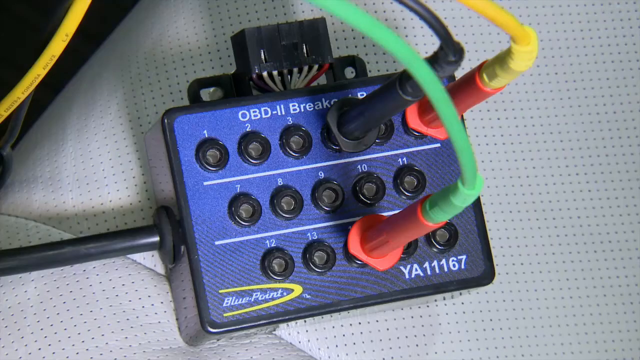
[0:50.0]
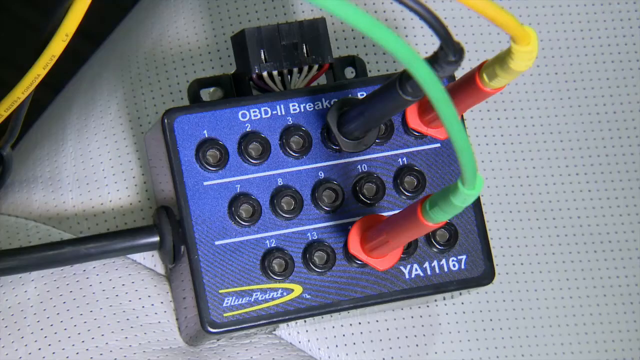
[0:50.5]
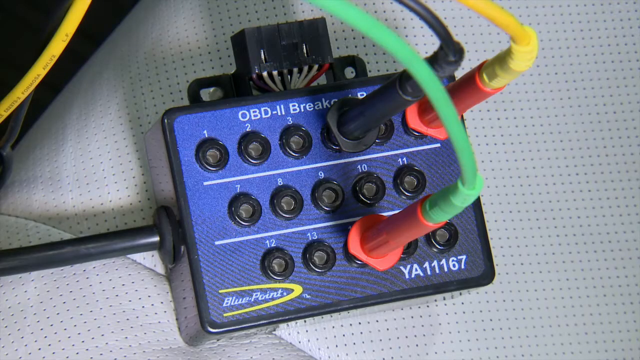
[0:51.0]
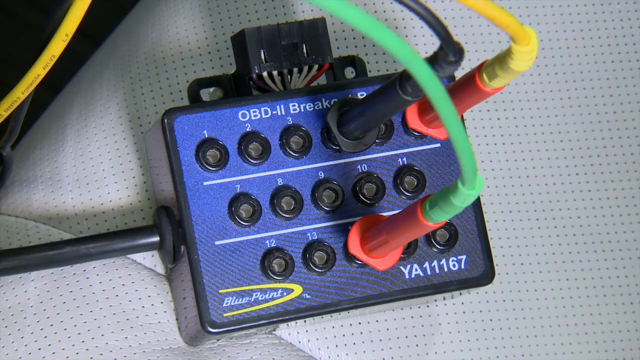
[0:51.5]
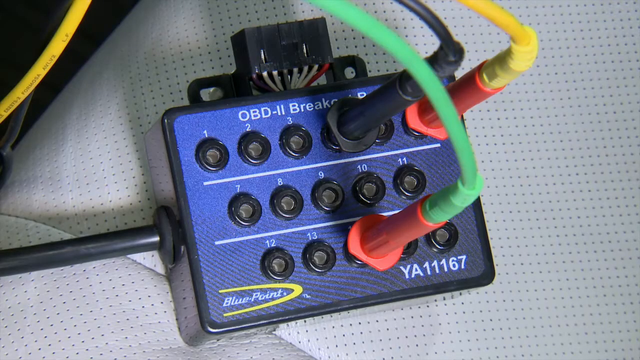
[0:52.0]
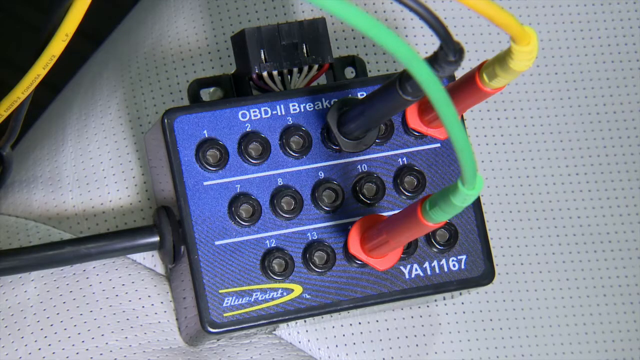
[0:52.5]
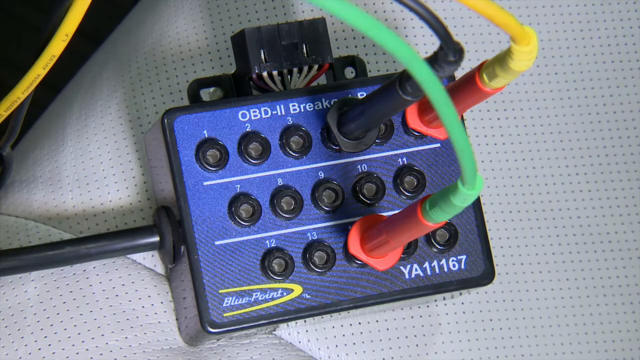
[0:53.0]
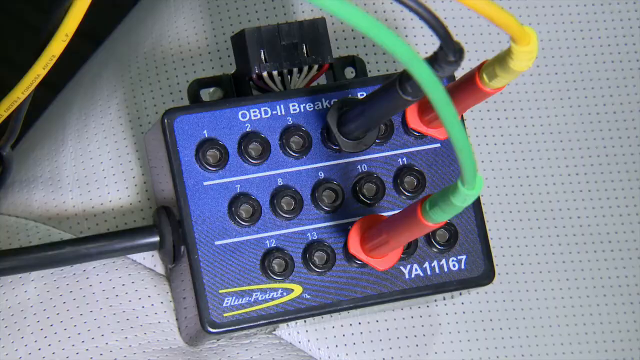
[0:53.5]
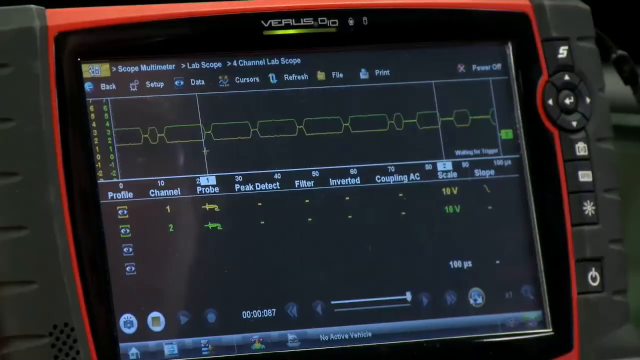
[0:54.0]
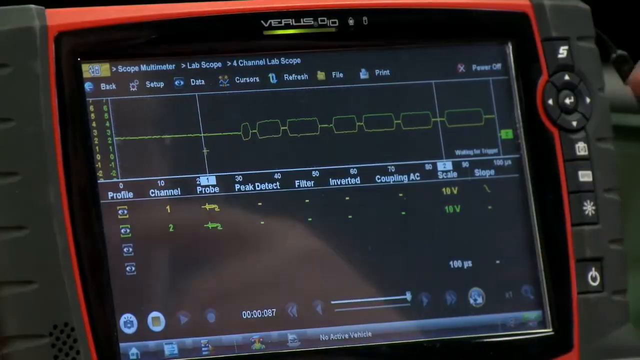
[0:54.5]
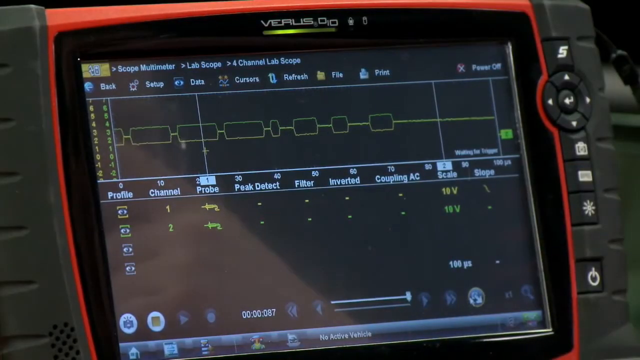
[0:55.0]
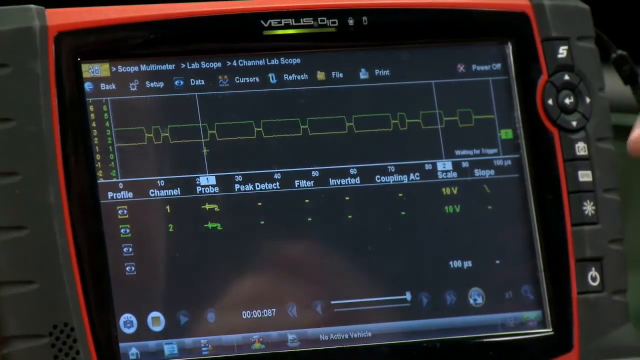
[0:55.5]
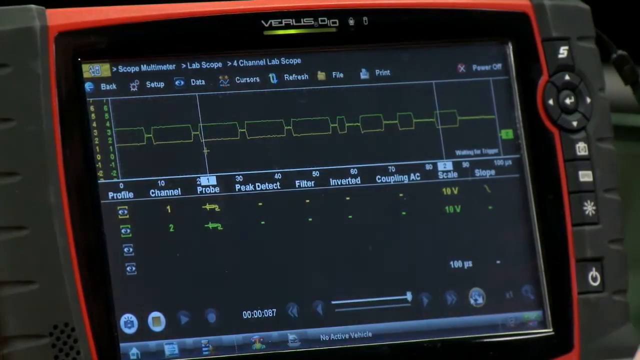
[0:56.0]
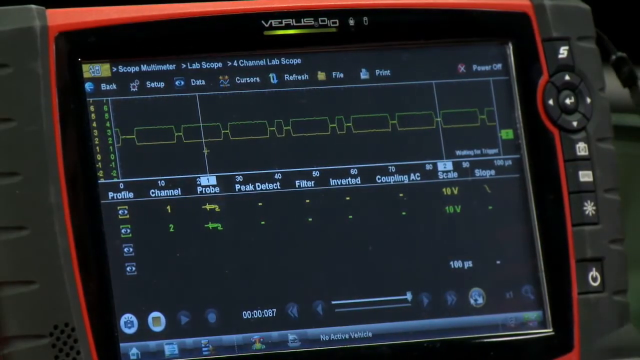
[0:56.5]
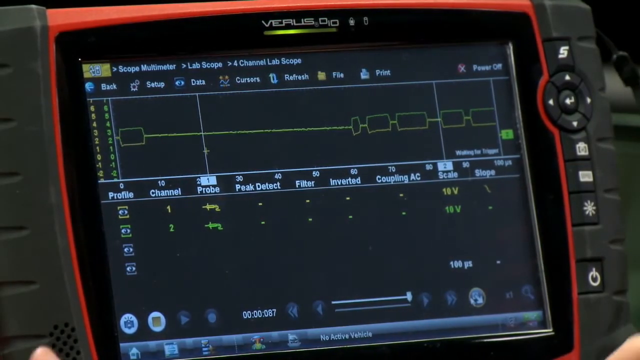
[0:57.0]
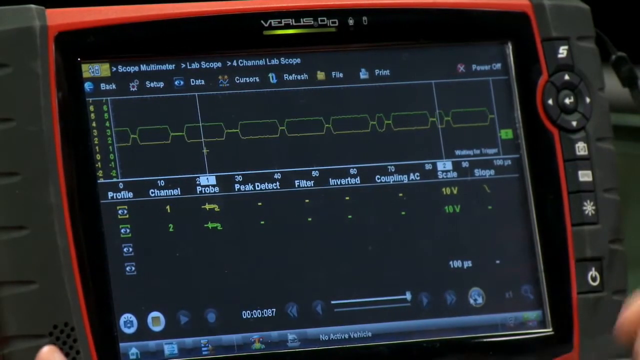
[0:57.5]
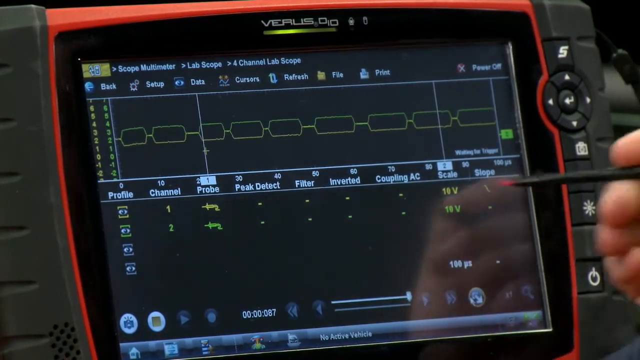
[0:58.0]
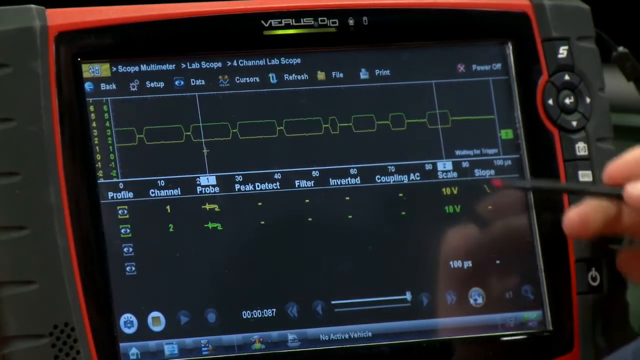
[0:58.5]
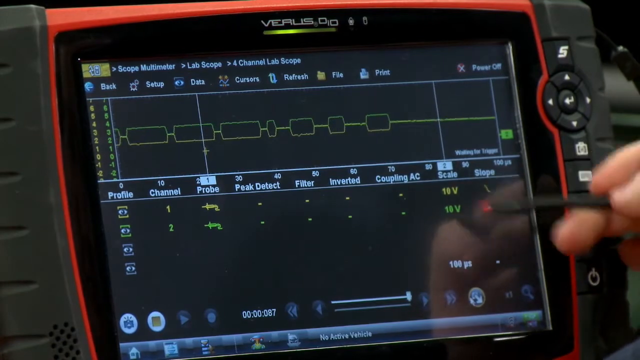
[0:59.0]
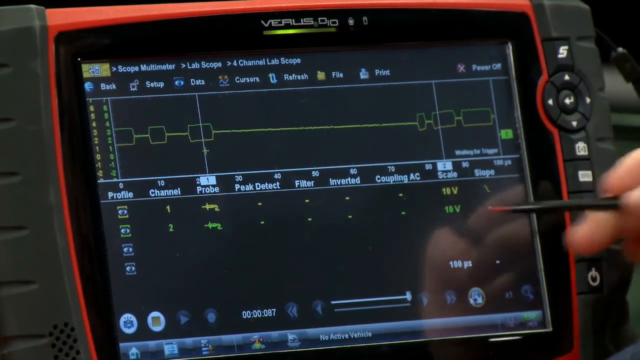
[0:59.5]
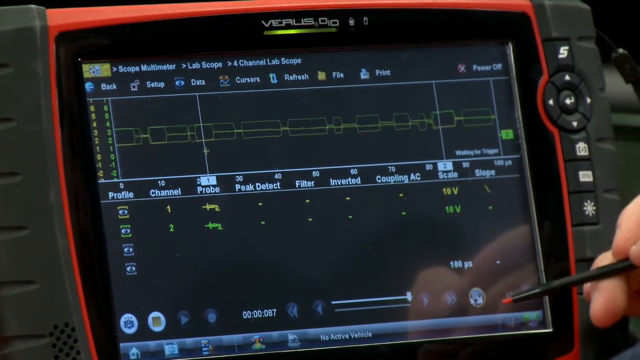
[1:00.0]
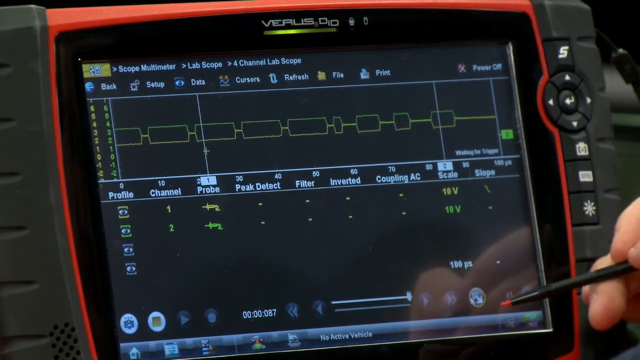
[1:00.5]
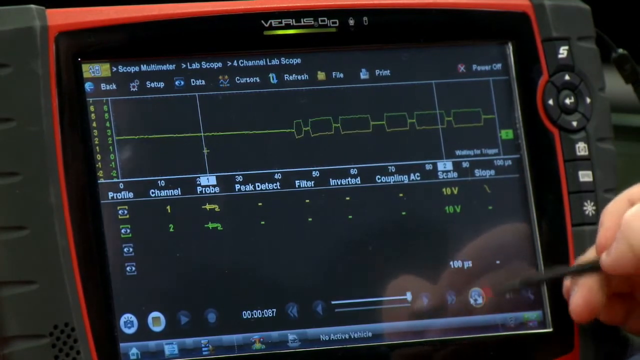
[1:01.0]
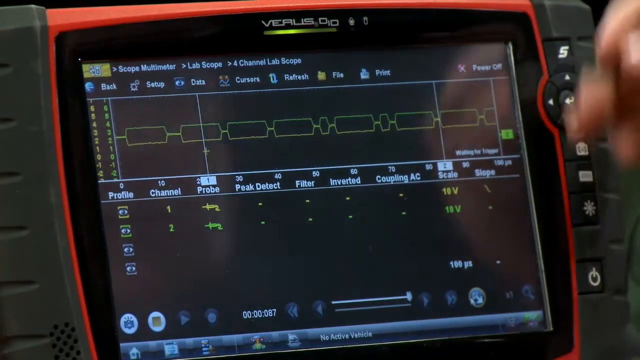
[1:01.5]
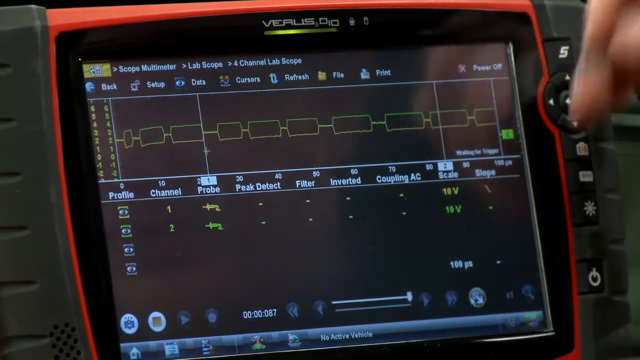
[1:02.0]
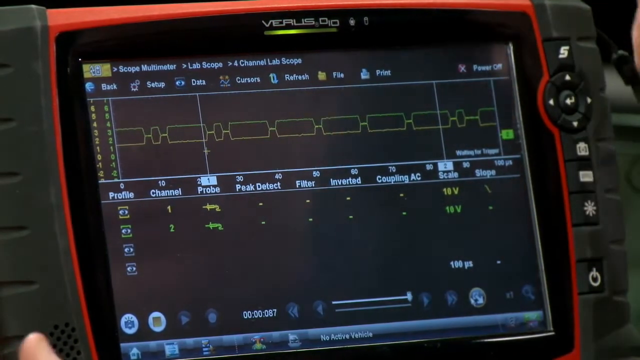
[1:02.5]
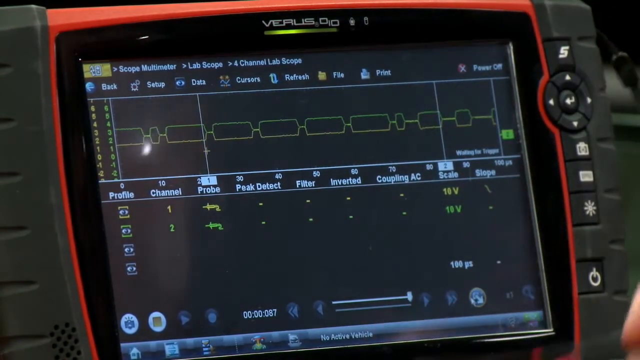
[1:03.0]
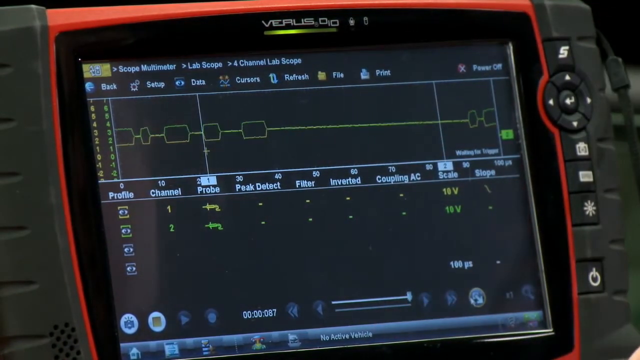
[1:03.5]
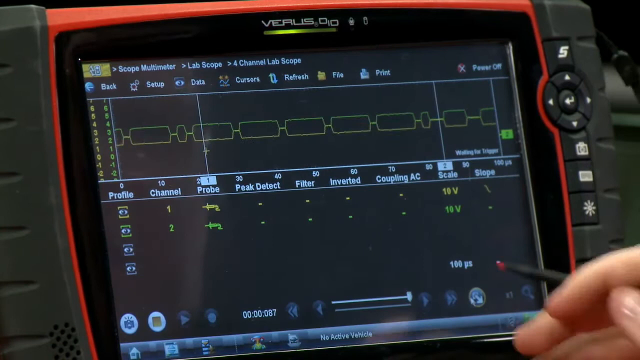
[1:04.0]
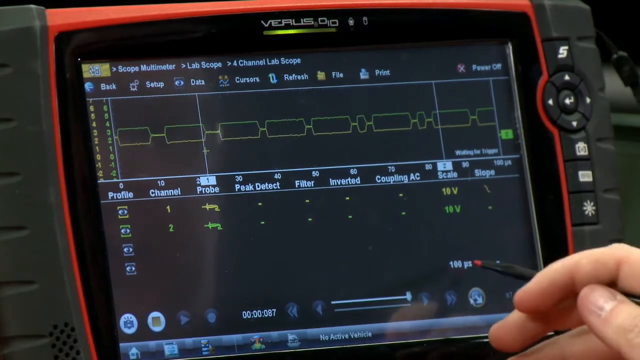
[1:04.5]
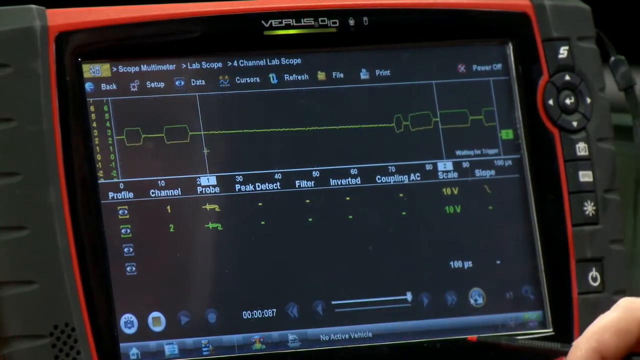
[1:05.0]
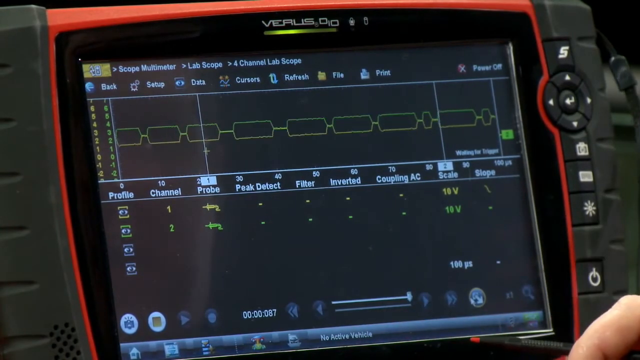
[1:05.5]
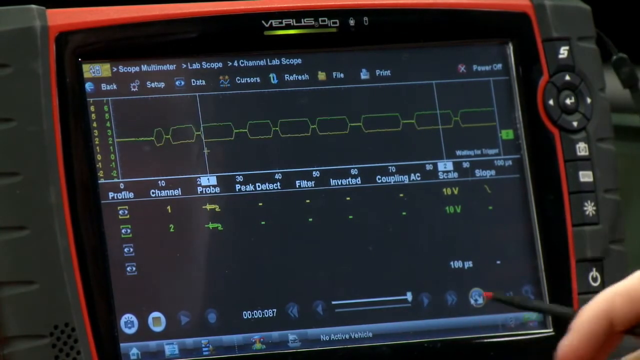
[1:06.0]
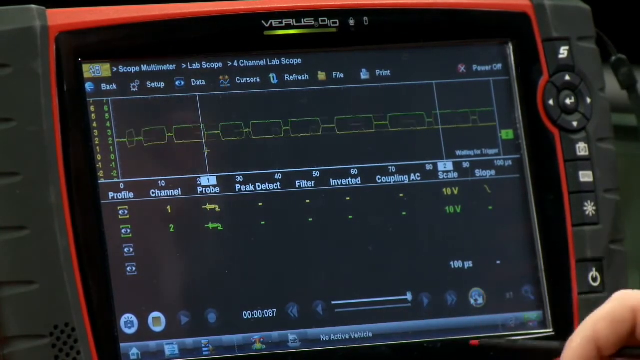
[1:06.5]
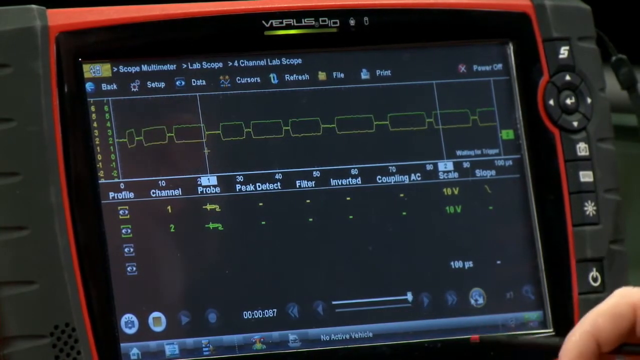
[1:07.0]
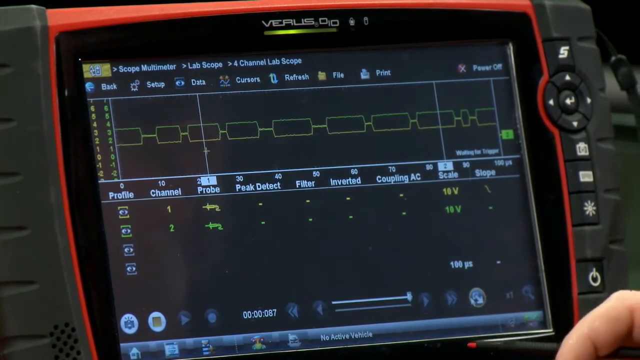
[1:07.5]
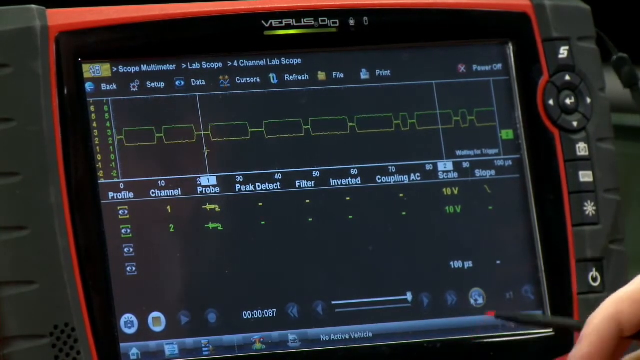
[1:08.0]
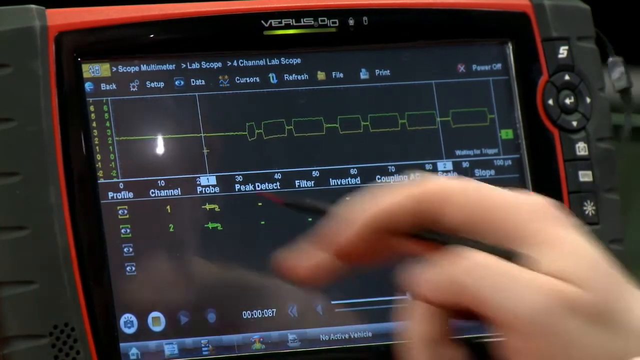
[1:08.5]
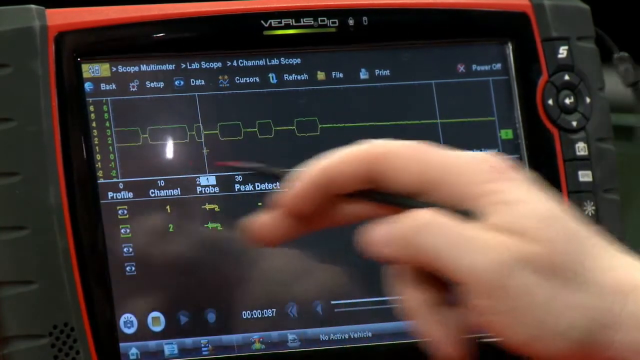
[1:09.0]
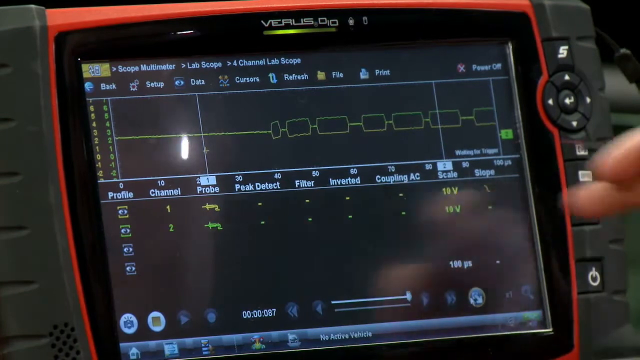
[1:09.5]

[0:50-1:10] A display titled "Versus" is shown. Jason, the field trainer, uses a stylus-type pen to point and click on the display. Items on the display include "Profile," "Channel," "Probe," "Peak Detect," "Filter" and "Inverted," and the upper right corner says "Power Off." The display shows a lab scope, a four-channel lab scope, and underneath are "setup," "data," "cursors," "refresh," "file" and "print." He keeps clicking on various places with the stylus. Numbers are listed, including "11V," apparently 11 volts, and he points the stylus at it. As he talks, rectangular boxes move from right to left at a steady pace.